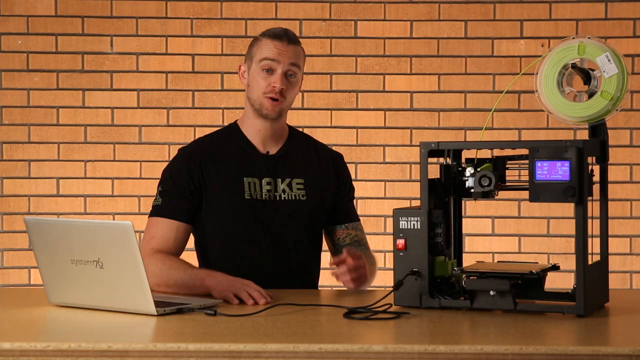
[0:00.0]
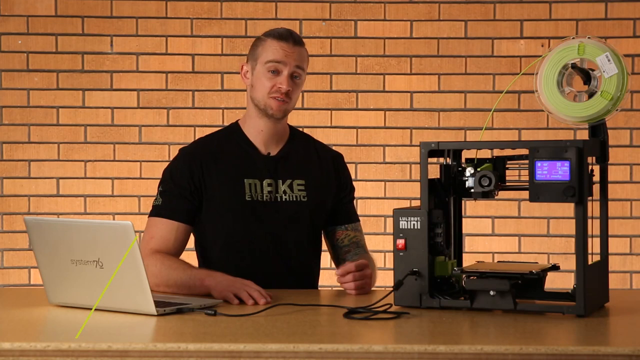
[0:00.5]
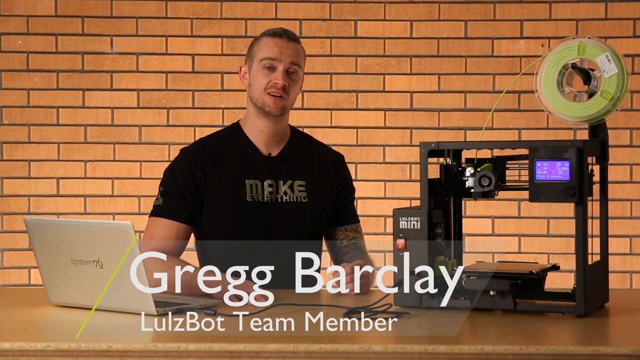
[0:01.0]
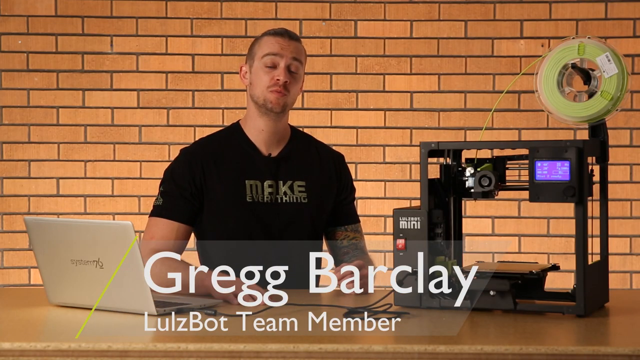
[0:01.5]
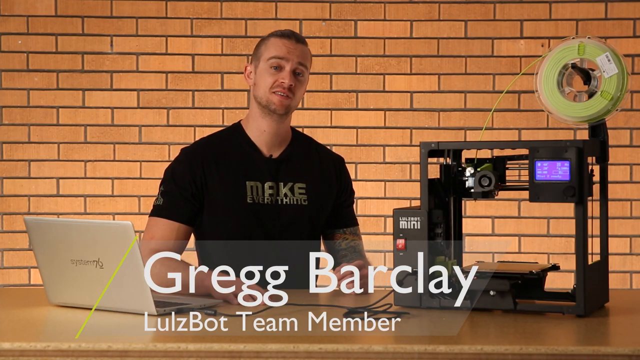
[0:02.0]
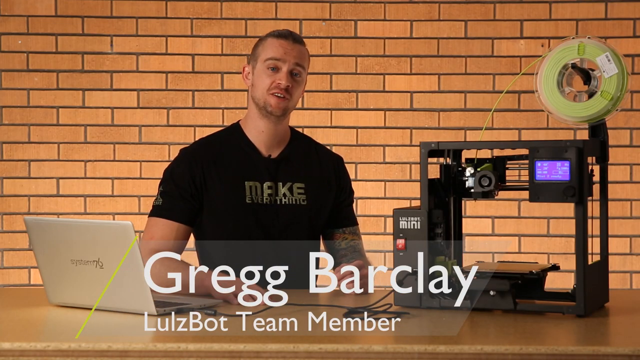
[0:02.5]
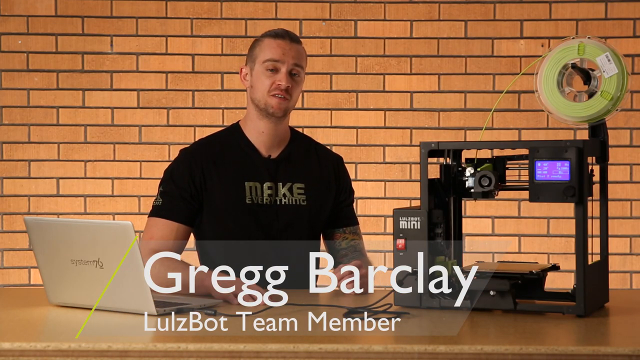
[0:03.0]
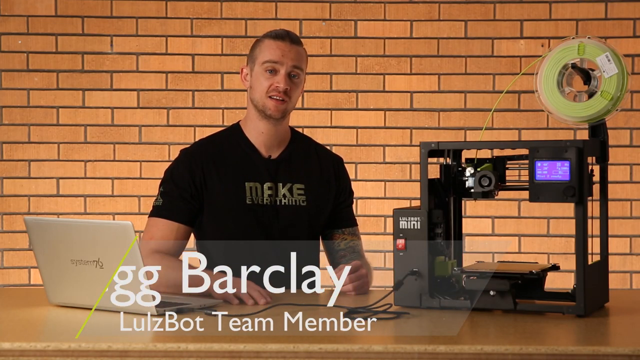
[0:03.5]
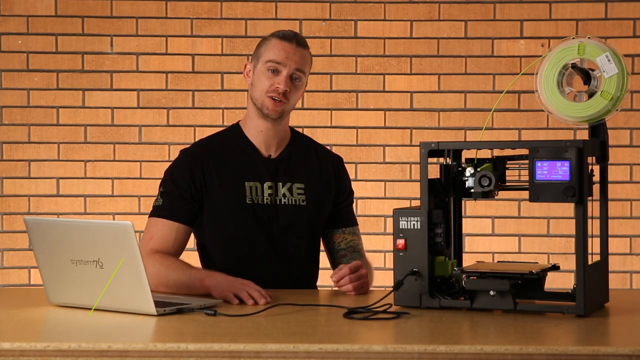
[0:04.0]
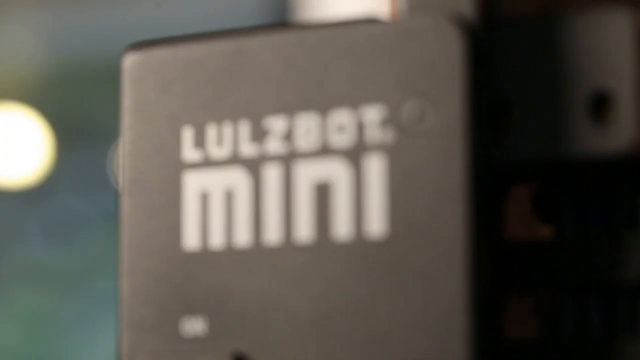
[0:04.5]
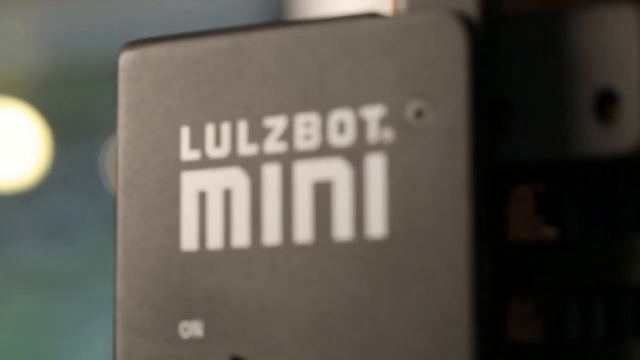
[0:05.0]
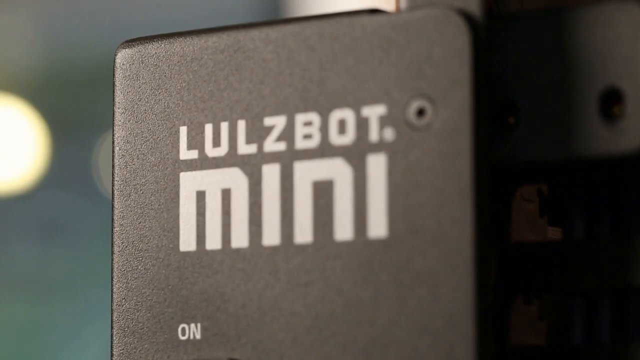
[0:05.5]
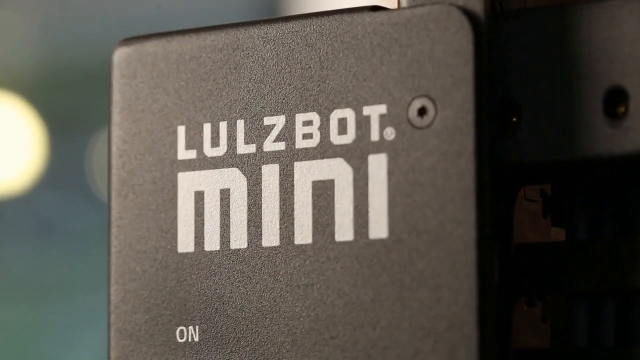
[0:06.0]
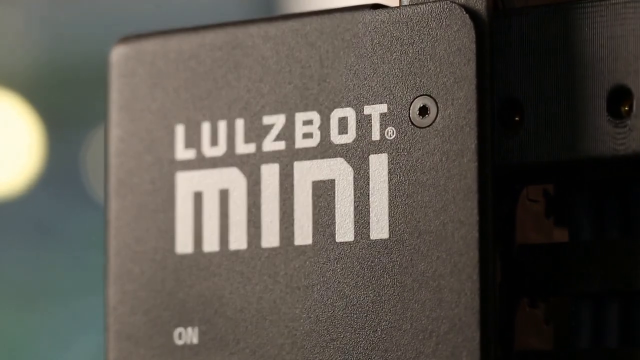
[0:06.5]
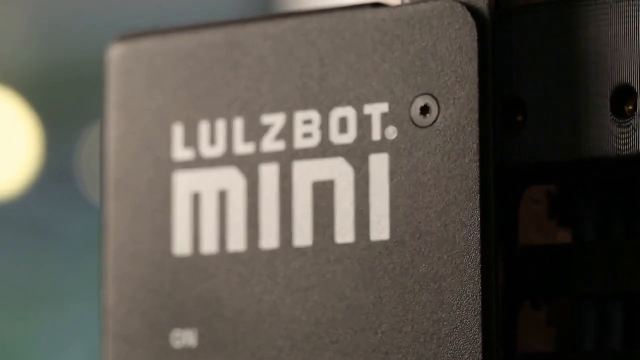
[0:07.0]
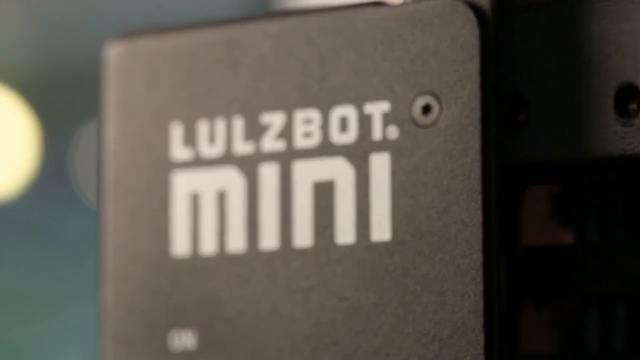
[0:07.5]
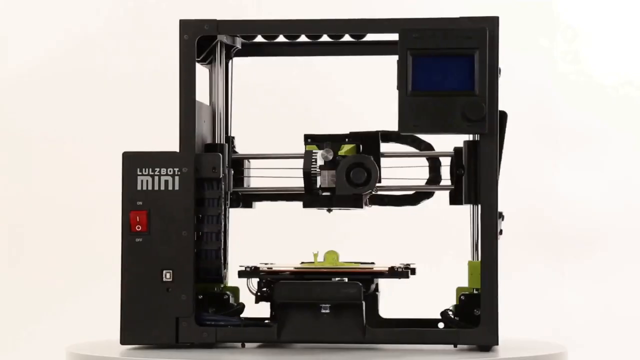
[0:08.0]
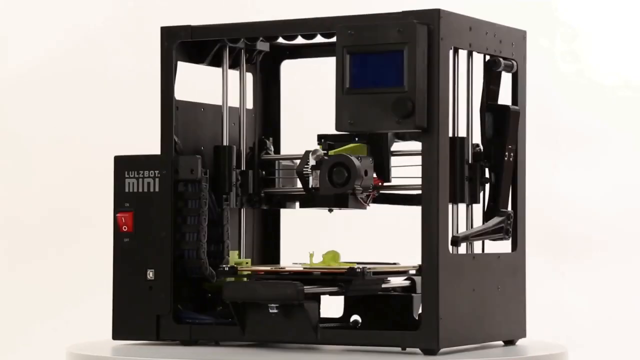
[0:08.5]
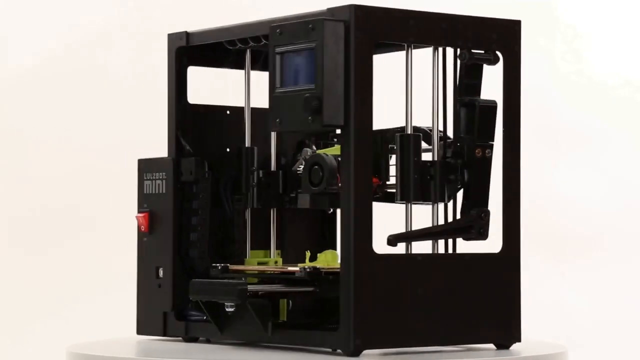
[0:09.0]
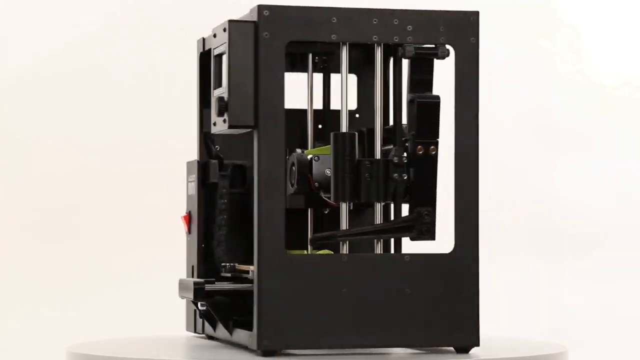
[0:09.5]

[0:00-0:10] A young man, perhaps 20 years old, with a short beard and short black hair, wears a black t-shirt bearing the words "Make Everything" or possibly "Make Anything". An open laptop sits on a table in front of him to his right, and a machine sits to his left. The machine is a metallic frame that seems to have things like cameras and solenoids attached to it, with an Arduino box attached to its left side as seen by the viewer. The man talks, and text appears at the bottom of the screen identifying him as Gregg Barclay, LulzBot team member. He is smiling. An image of a gray box labeled "LulzBot Mini" then appears, and the LulzBot Mini twirls so it can be seen from every angle.